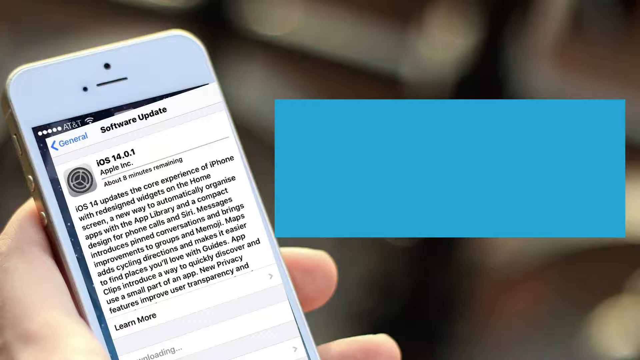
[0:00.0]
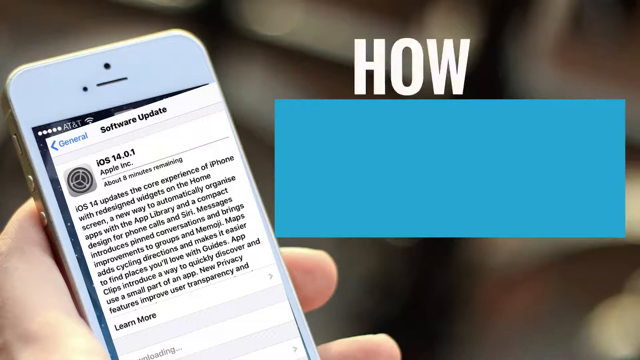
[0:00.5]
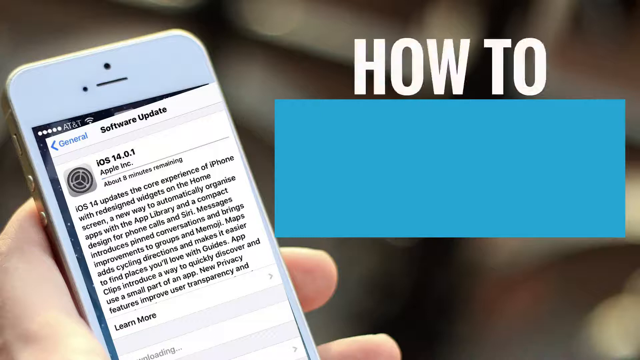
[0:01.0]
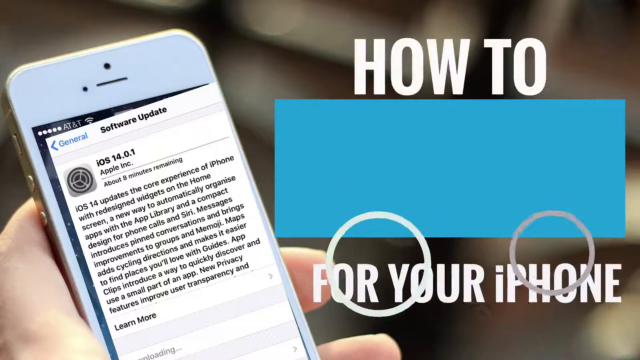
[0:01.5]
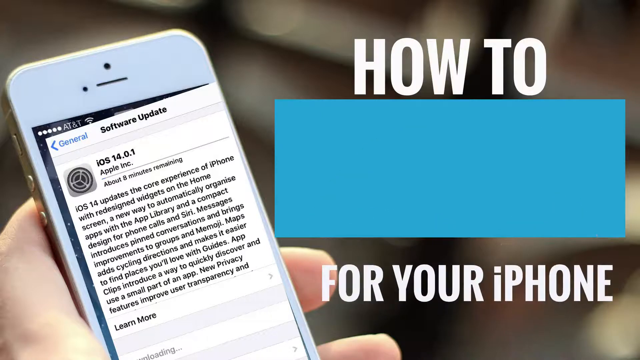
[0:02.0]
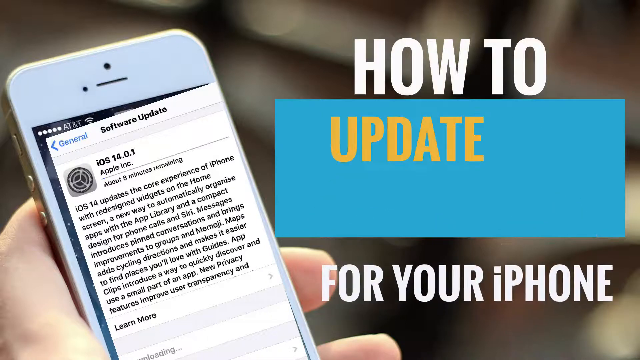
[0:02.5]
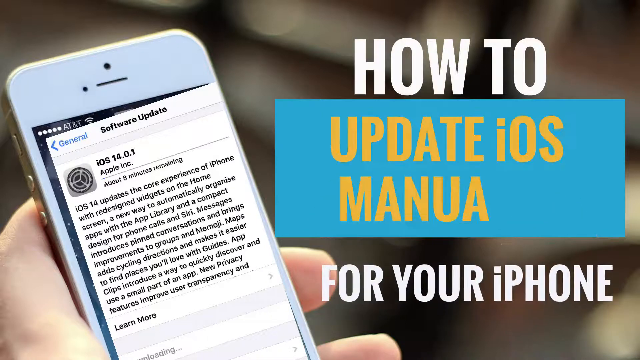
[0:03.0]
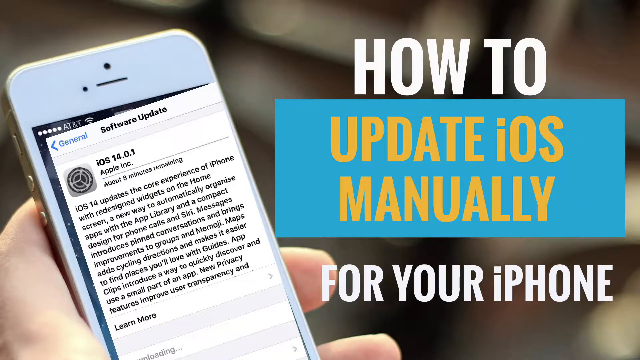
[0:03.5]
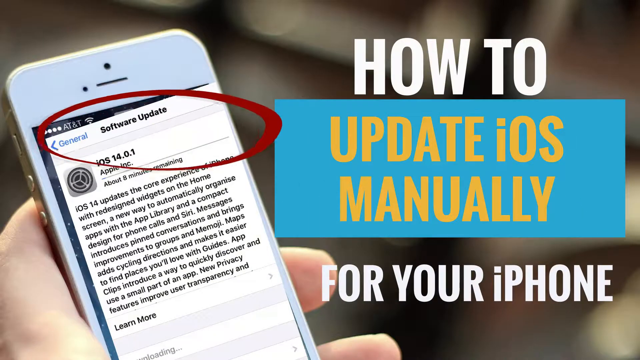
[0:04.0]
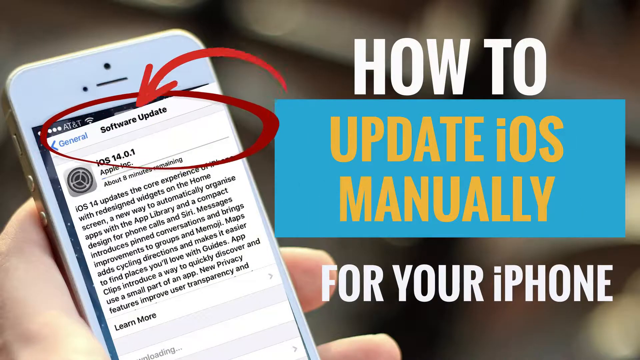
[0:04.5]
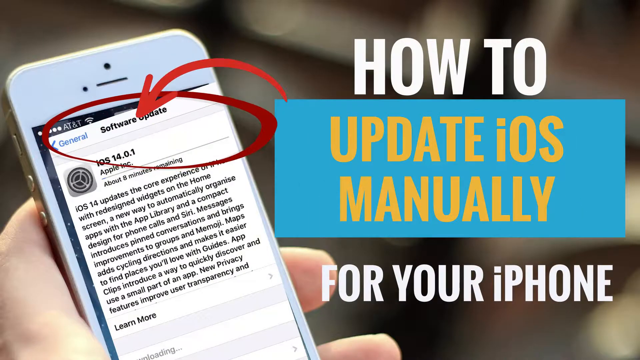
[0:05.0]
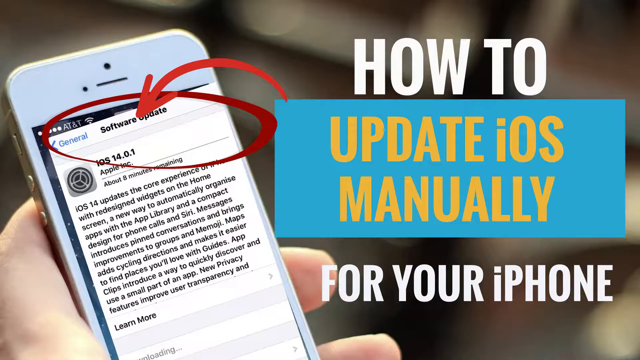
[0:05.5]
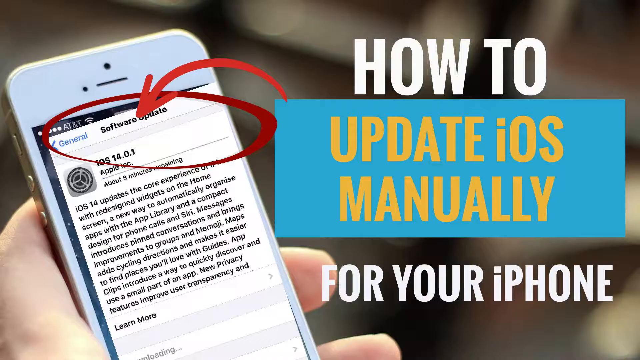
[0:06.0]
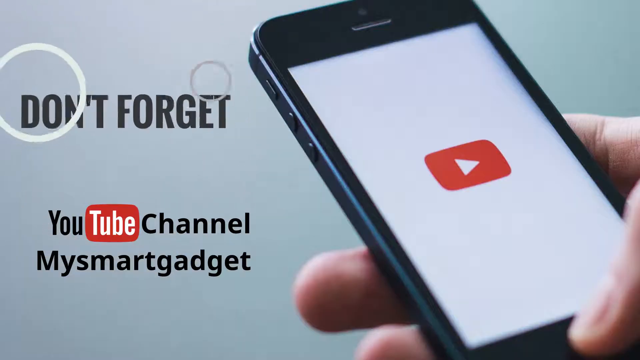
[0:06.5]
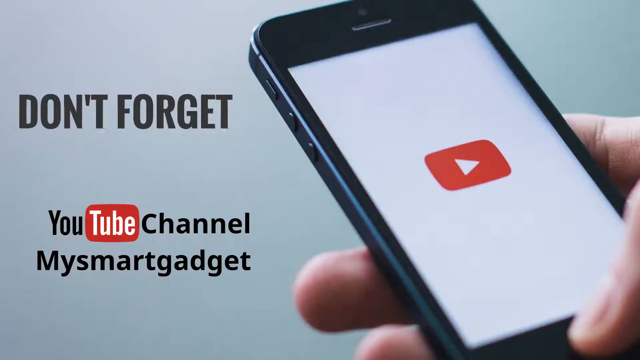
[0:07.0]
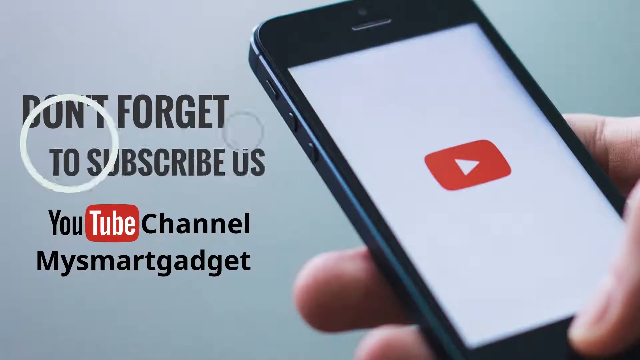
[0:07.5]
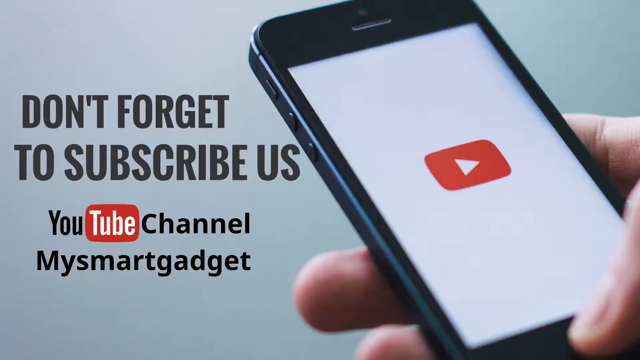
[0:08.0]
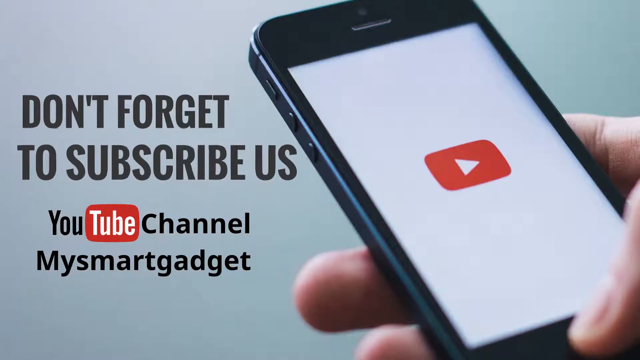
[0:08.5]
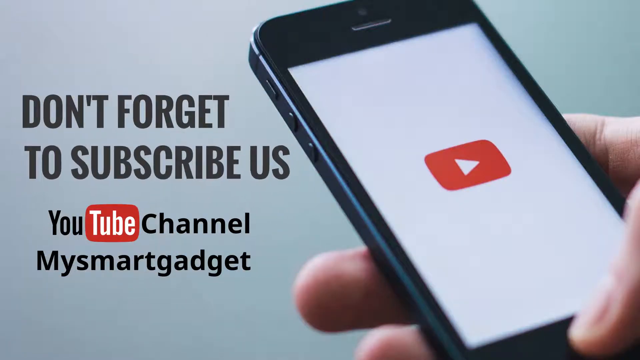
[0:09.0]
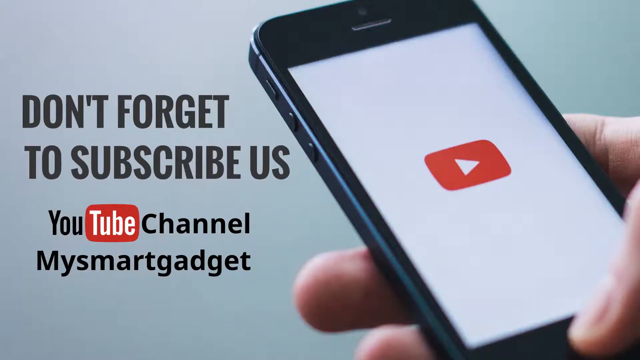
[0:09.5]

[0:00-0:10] The video appears to be a how-to tutorial on updating iOS manually on the iPhone. A person holds an iPhone in his hand, and on the right side is the video title about how to update iOS manually. The phone screen shows the software update screen with iOS 14.0.1, and the update is downloading with eight minutes remaining. Below it is a description of iOS 14 and the new features it brings. Next, an illustration shows which screen the user should go to. After that, a screen reminds viewers not to forget to subscribe to the "YouTube channel MySmartGadget"; it shows the user holding a cell phone in his hand, with a YouTube logo in the middle of the screen.